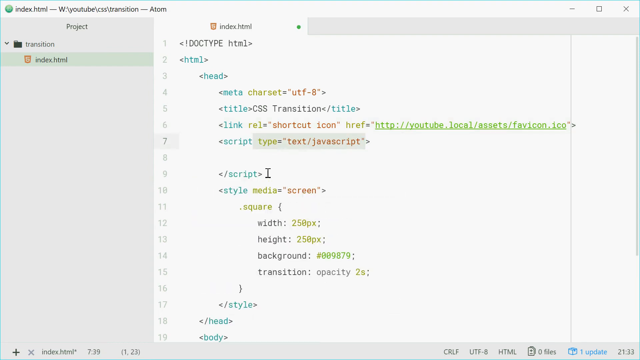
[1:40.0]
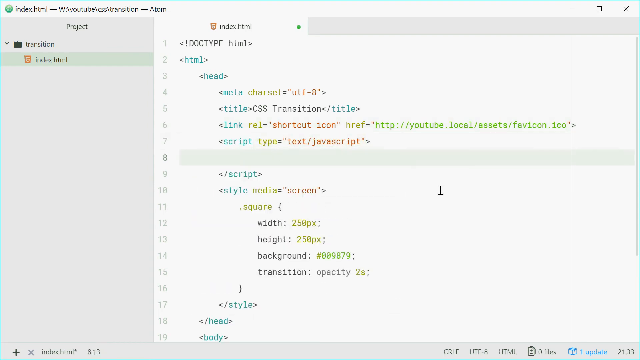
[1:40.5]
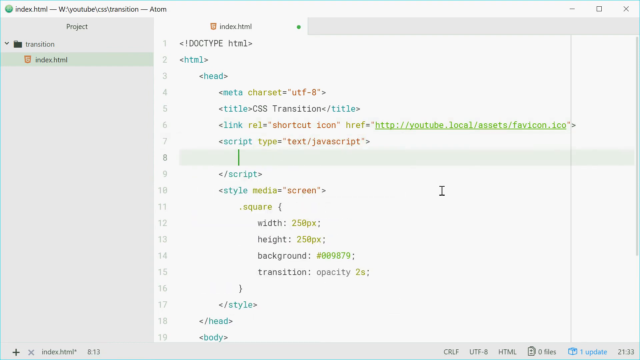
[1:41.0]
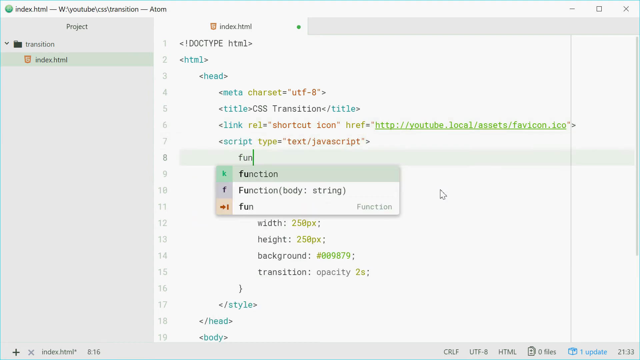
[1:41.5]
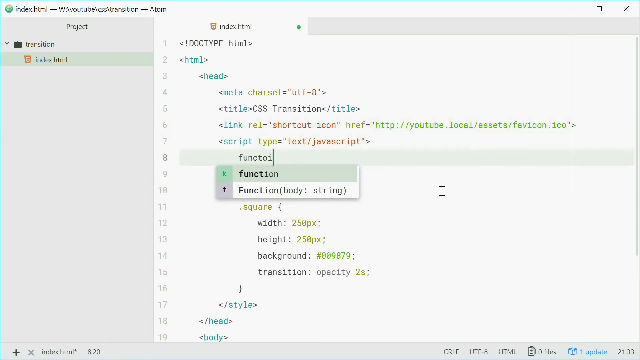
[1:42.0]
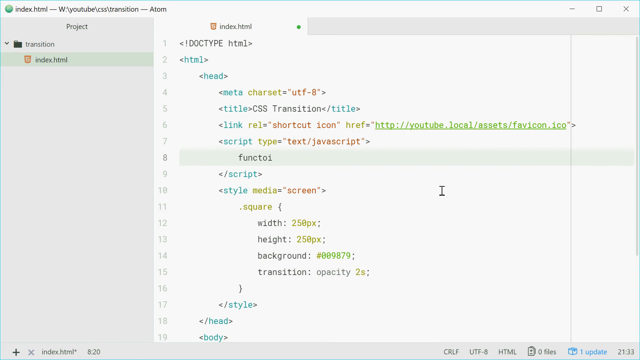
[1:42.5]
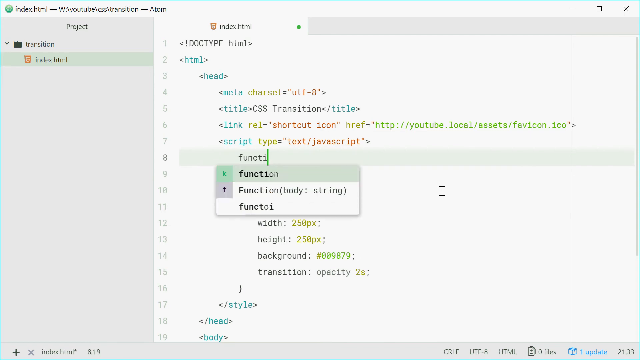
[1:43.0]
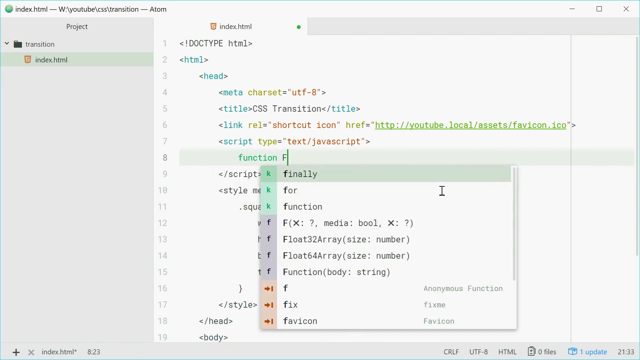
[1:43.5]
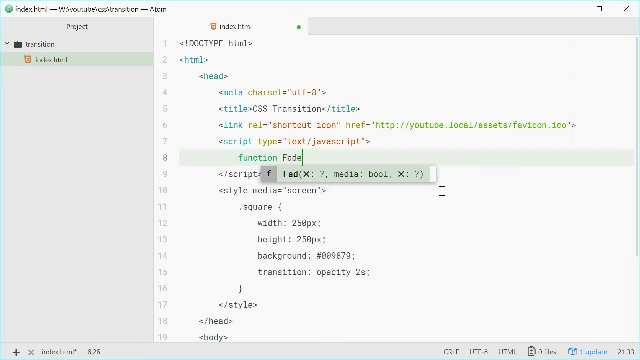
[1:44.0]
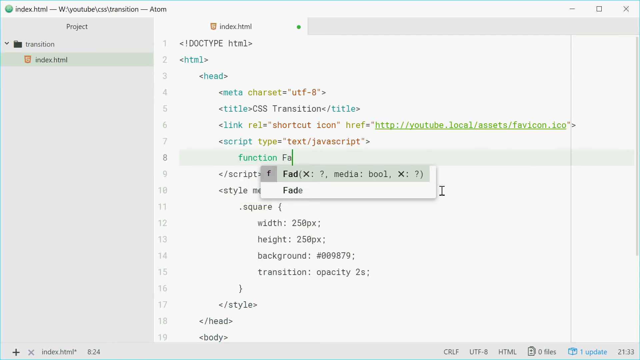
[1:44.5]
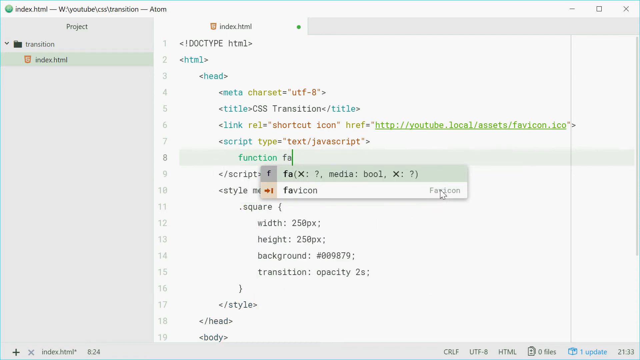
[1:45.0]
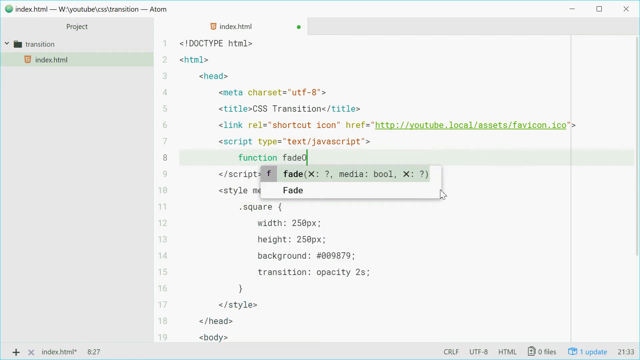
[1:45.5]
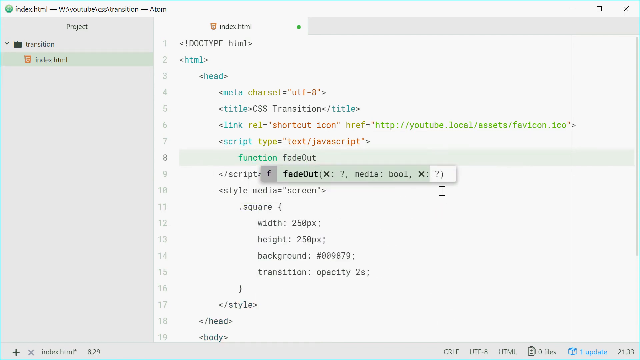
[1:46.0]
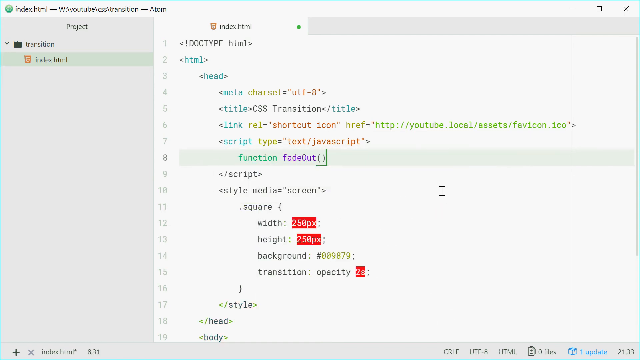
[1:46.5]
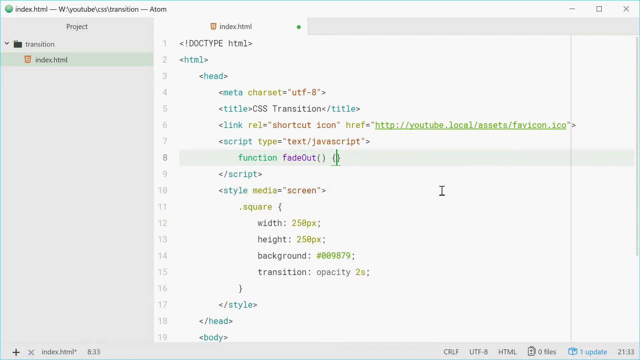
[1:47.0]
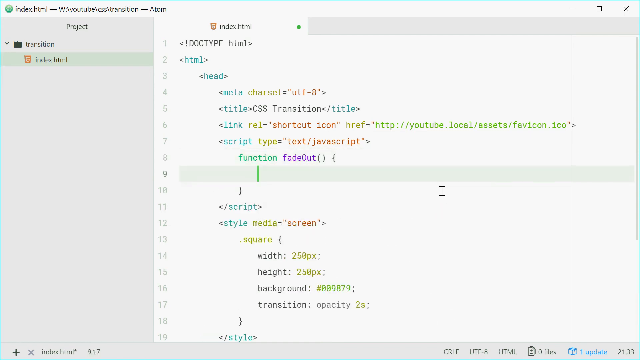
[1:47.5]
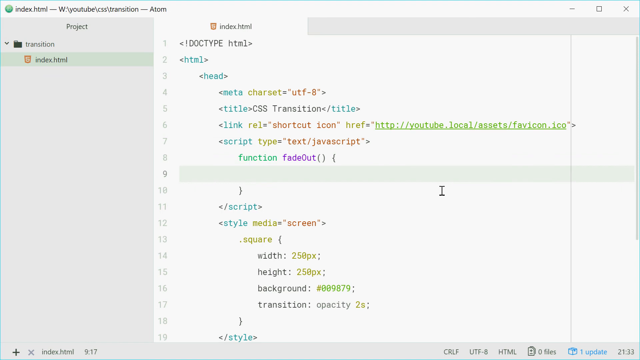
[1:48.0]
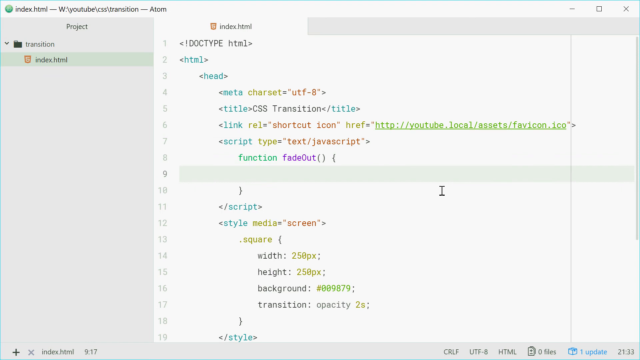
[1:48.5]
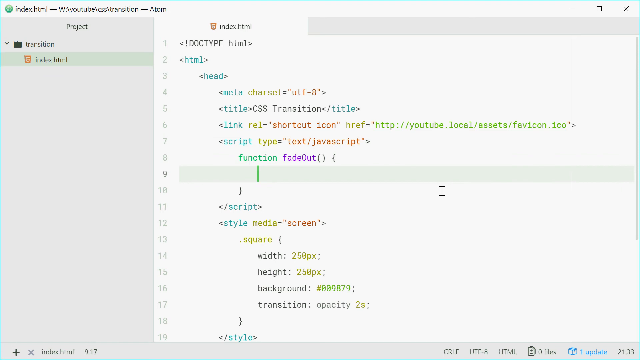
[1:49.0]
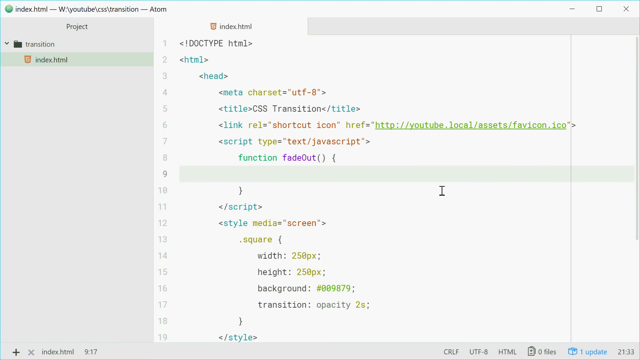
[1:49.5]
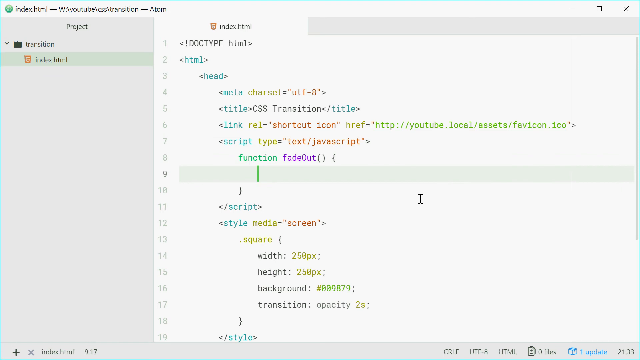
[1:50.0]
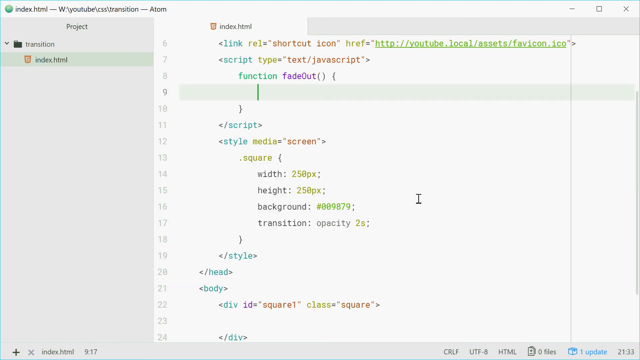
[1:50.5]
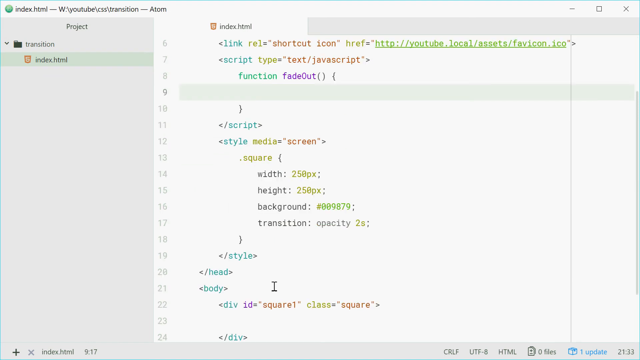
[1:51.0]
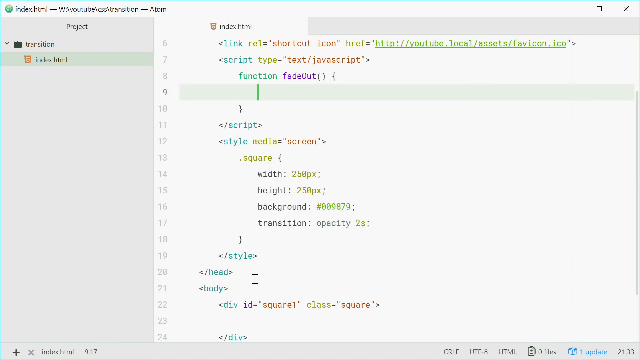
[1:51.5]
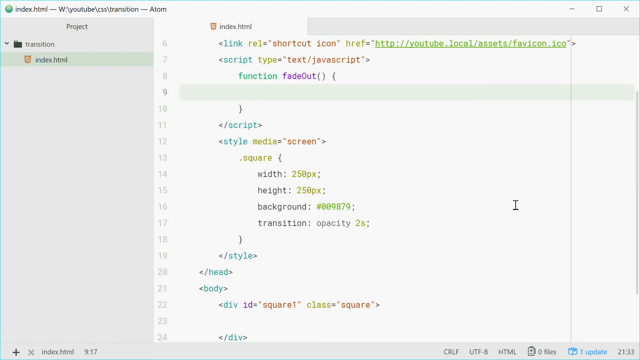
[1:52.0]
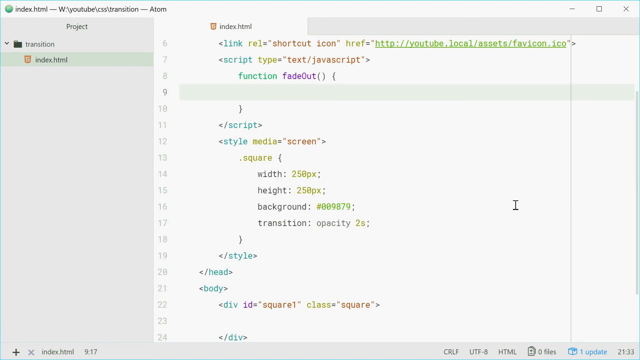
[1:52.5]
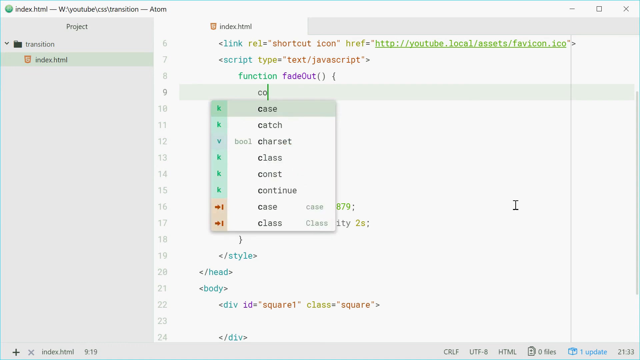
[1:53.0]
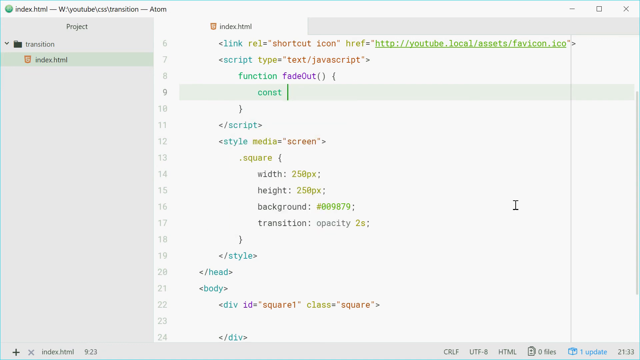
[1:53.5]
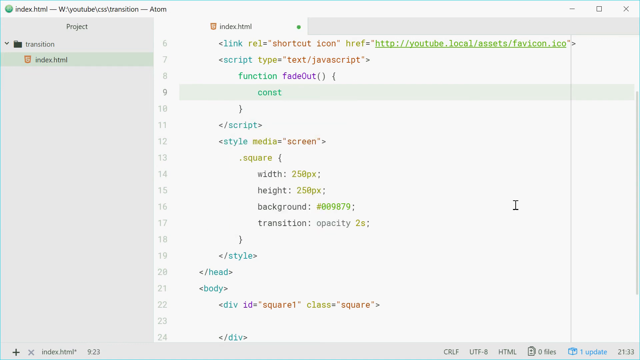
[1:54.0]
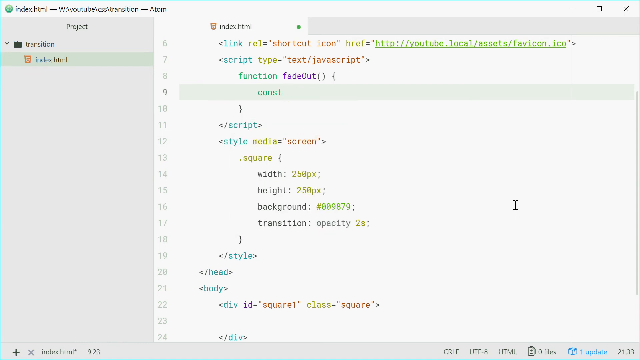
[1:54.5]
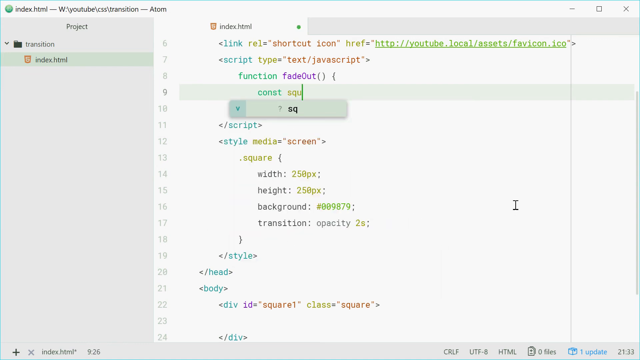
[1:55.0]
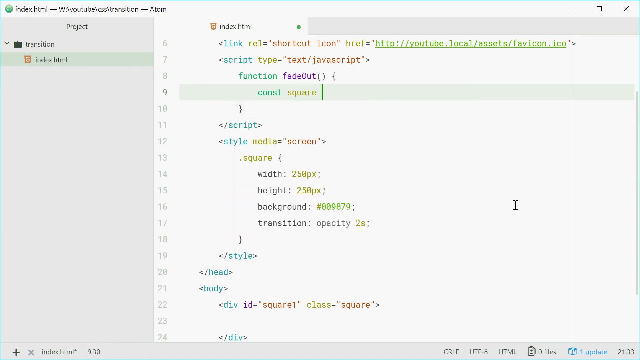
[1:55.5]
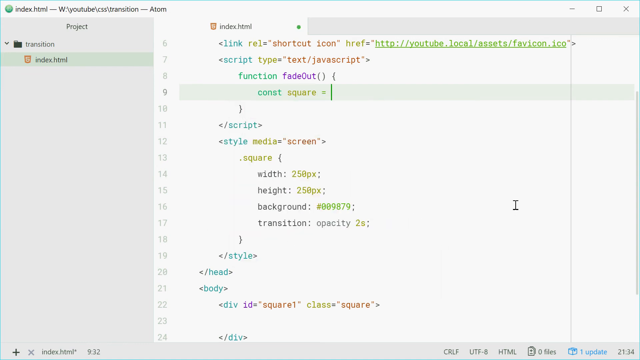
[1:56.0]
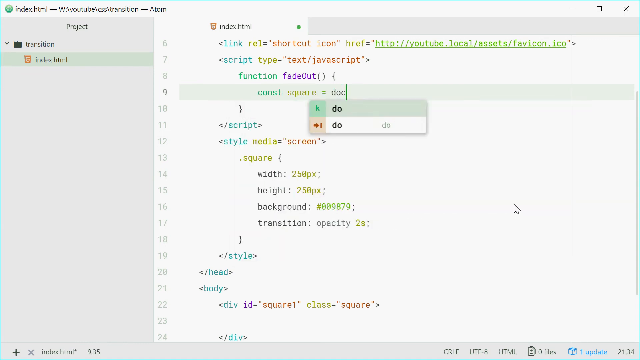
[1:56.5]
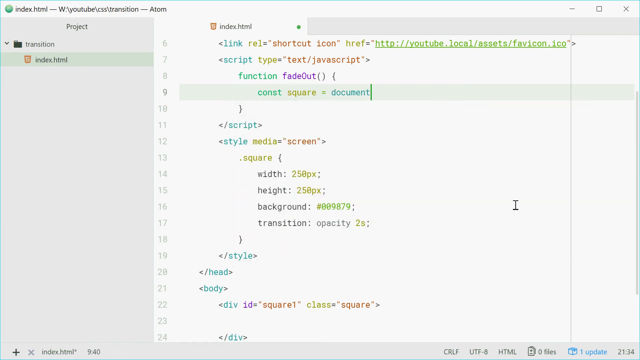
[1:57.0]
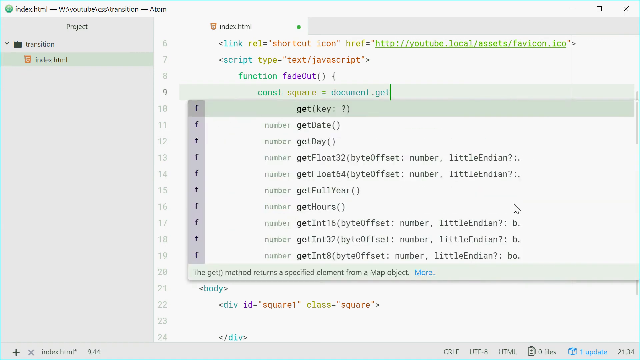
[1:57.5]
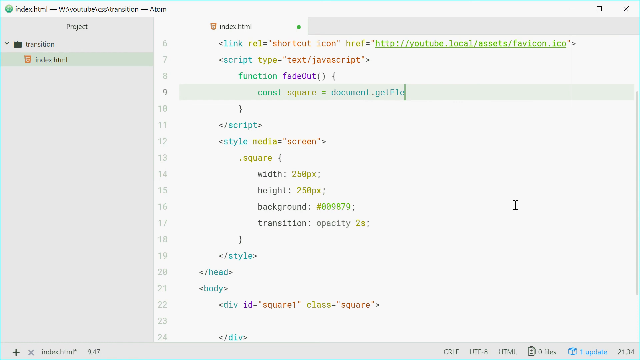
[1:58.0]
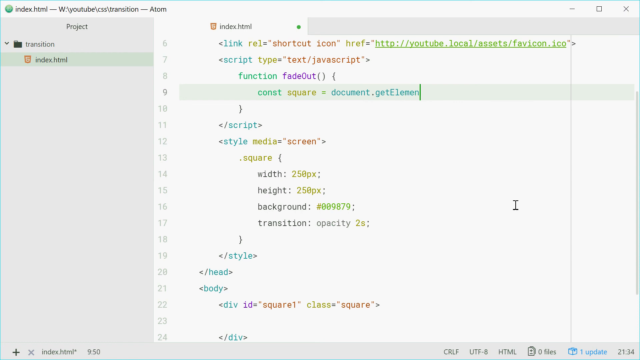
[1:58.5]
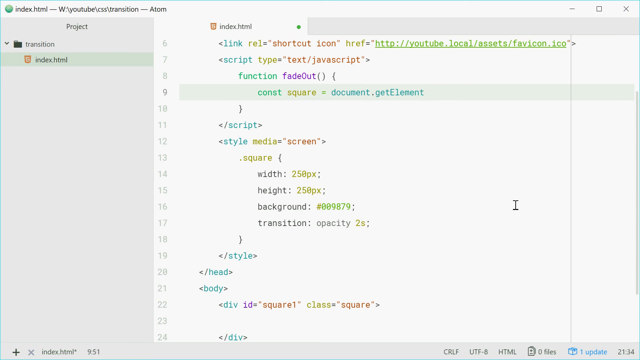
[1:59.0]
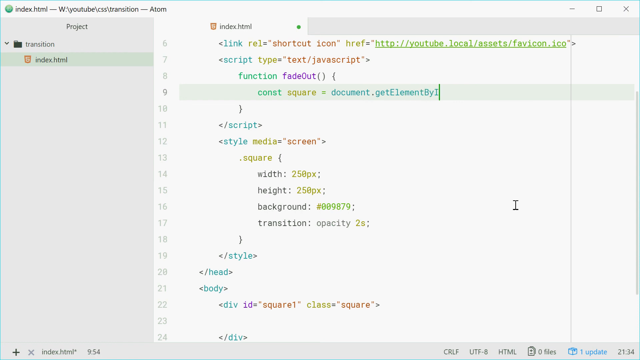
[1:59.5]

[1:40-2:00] The same index page and code are on screen, now somewhat edited, with a few characteristics added. The man adds a function fade, and a few options show up. He types a fade out function with open and close brackets and a constant, const square equals document get element by id with open and close brackets. The video stops abruptly in the middle of his editing.